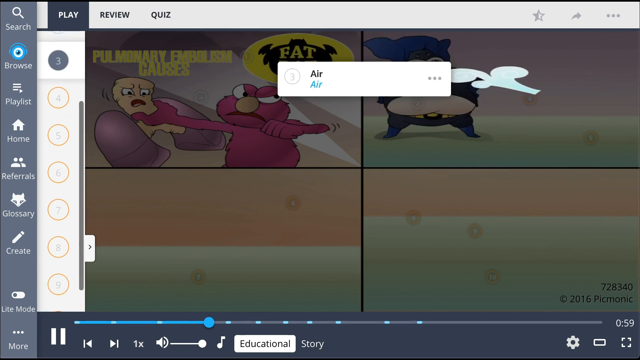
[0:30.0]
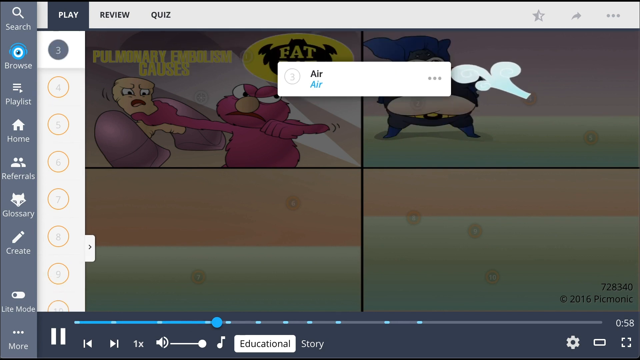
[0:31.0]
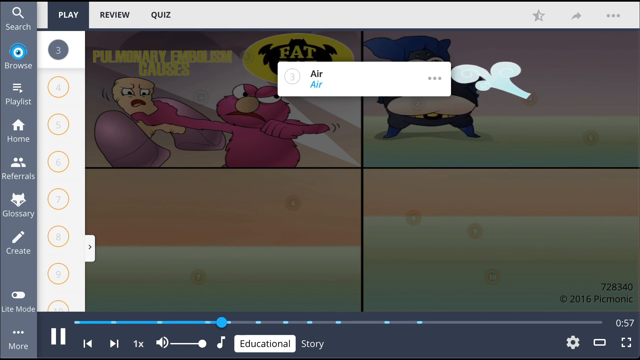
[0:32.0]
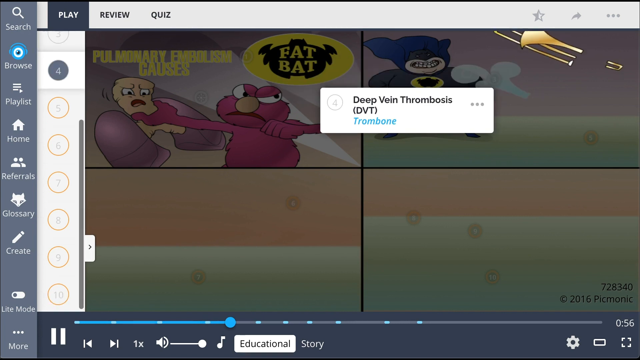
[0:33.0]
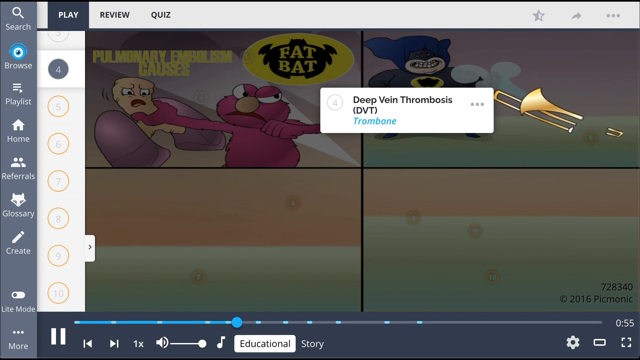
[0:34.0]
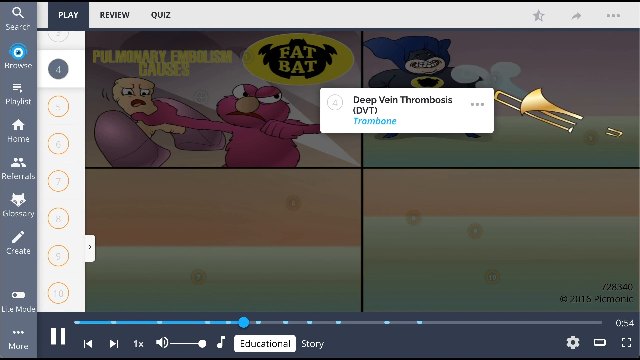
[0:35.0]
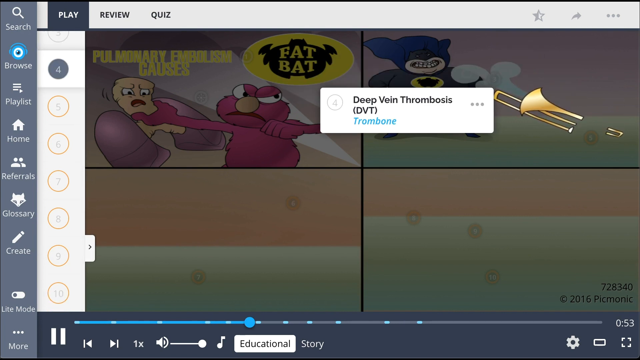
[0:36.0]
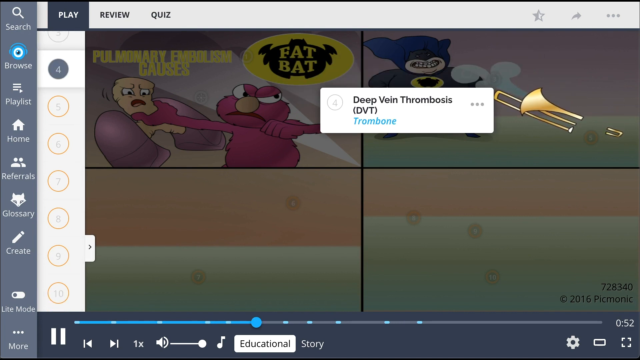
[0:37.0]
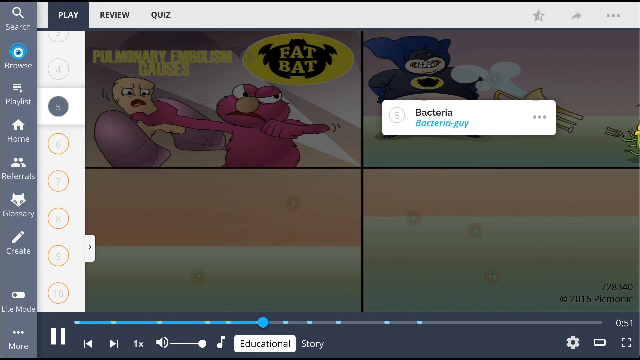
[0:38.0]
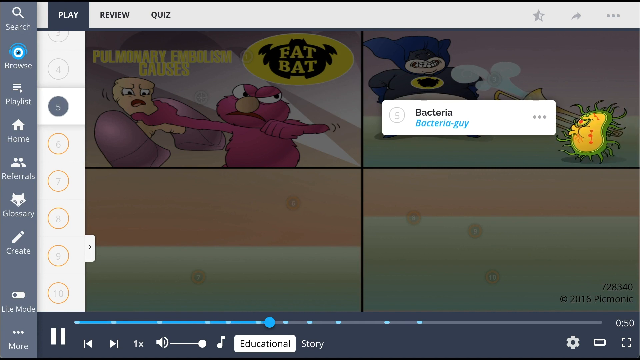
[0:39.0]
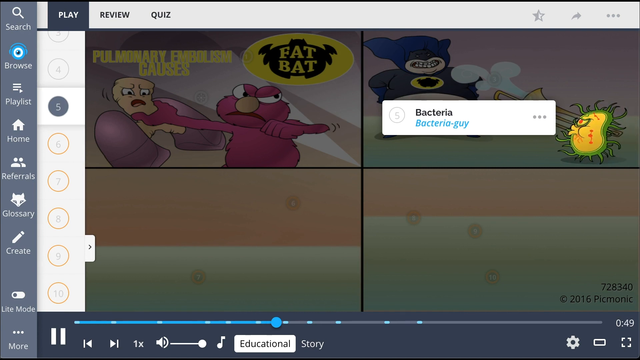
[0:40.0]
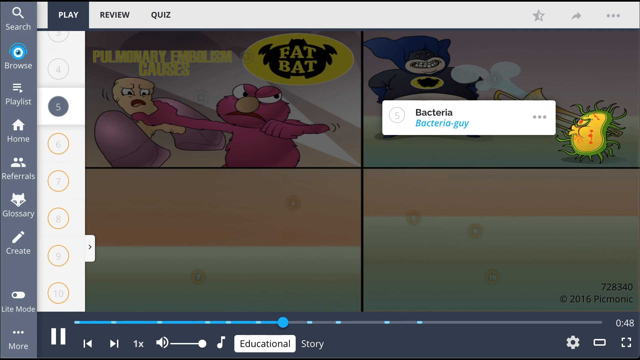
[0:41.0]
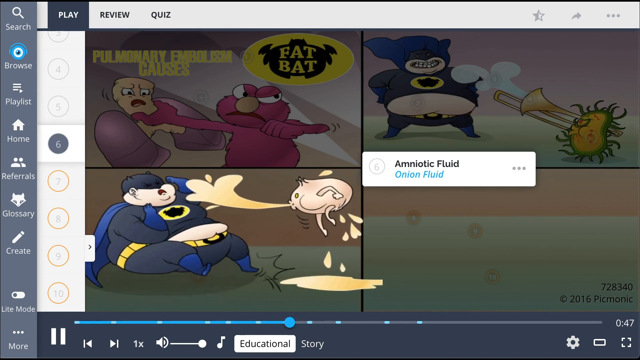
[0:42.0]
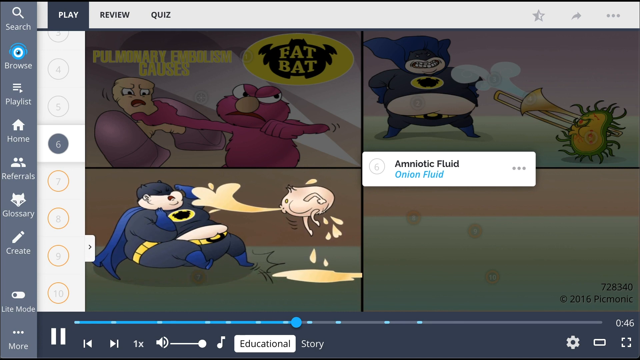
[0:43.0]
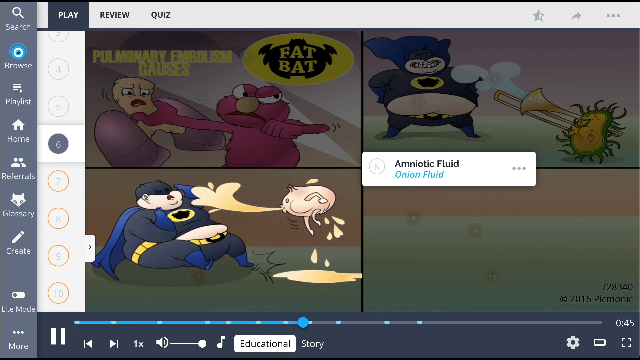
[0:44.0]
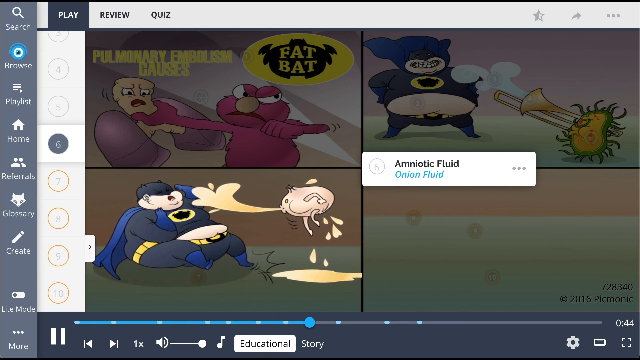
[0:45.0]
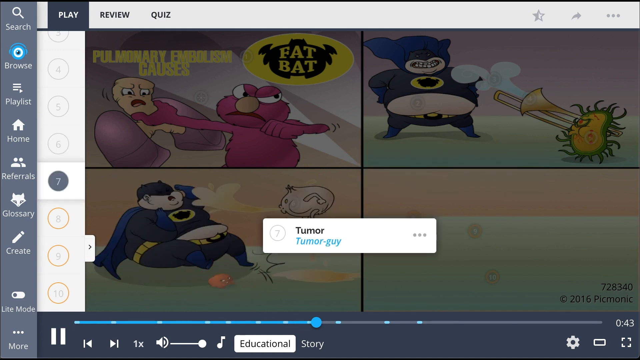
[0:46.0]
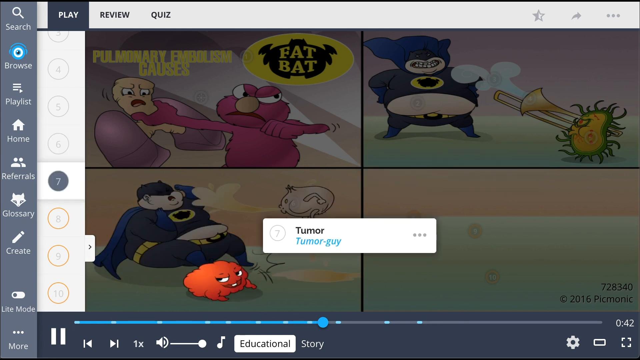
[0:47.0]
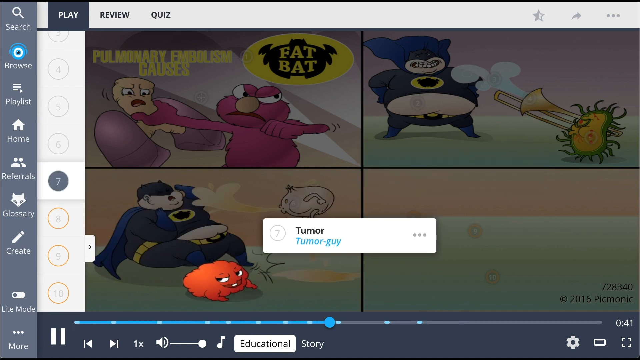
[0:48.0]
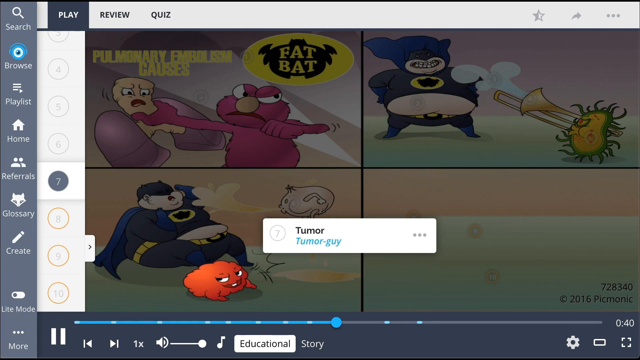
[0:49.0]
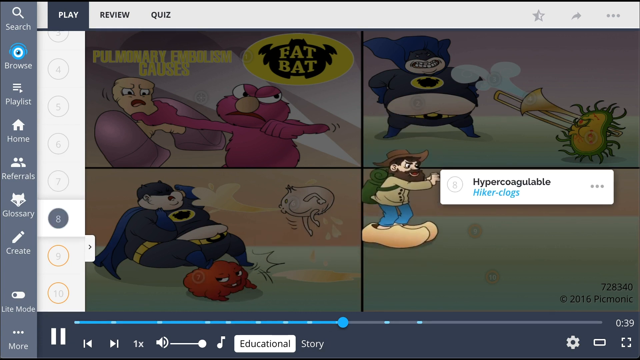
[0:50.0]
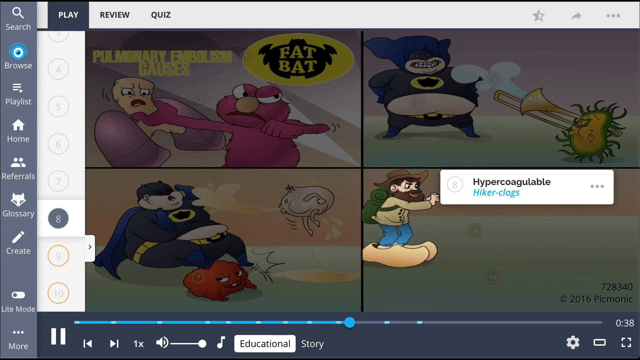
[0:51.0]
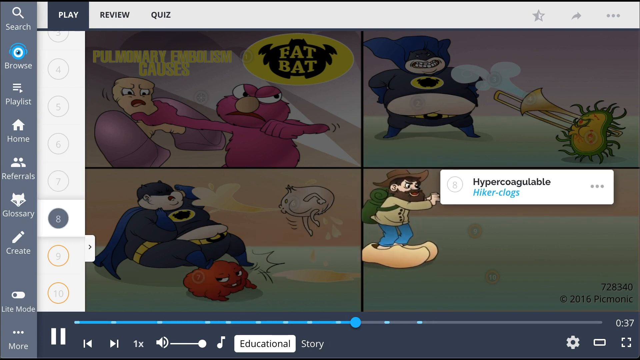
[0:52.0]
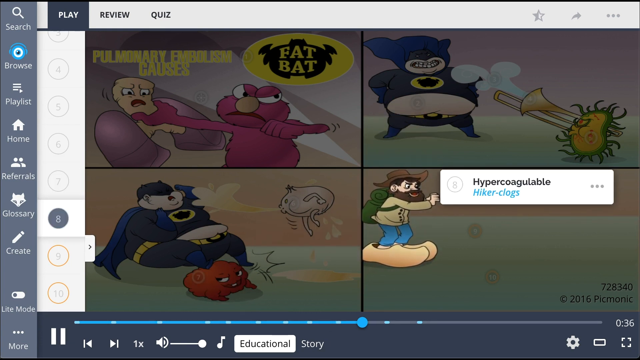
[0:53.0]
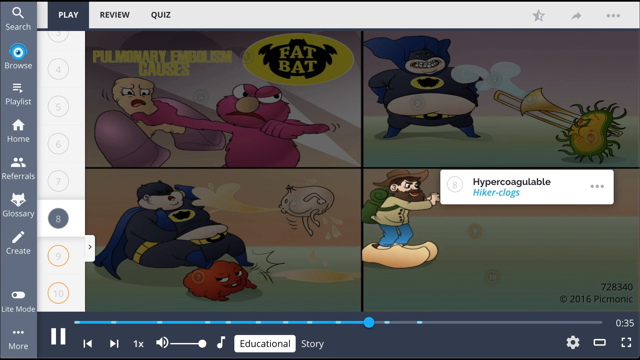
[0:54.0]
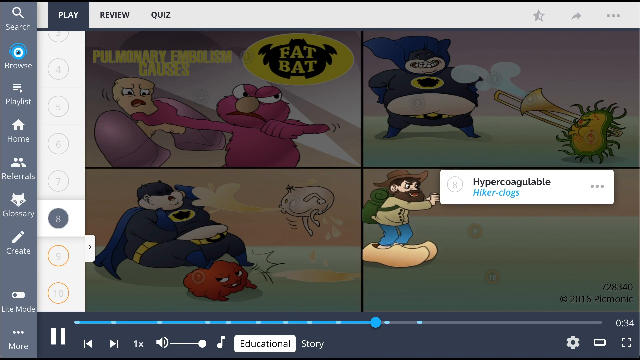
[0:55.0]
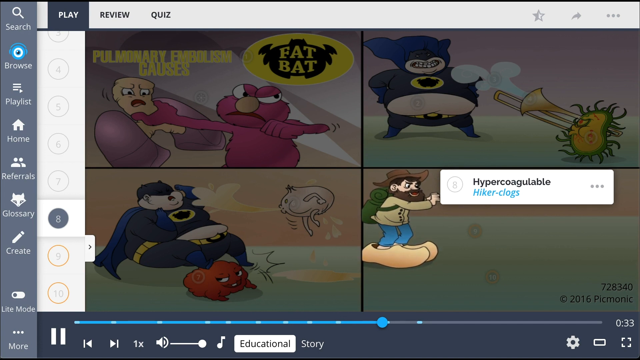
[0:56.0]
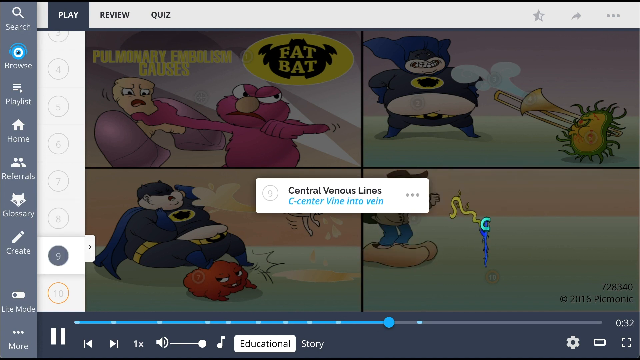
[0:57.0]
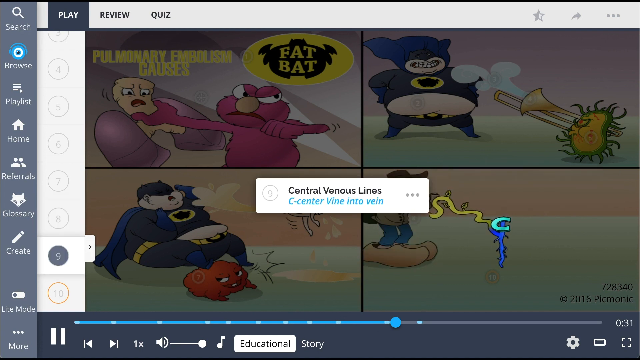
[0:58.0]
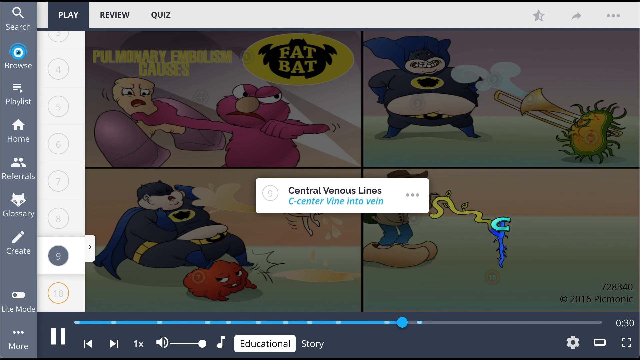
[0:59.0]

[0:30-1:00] Four little boxes from a screen share are shown. One box has an Elmo fighting an organ and an oval with Fat Bat in it. In the second square, a Fat Batman is breathing out air, and a small rectangular box overlaid on it says "three and air." The air Batman breathes out begins to move. A gold pipe instrument appears and bounces up and down, and from the side comes a green and yellow bacteria with red spots, blowing on the pipe instrument. In the third square, Fat Batman falls and amniotic fluid is breathed onto him from an onion, and a tumor suddenly appears right by Batman's leg. In the fourth square, a man with a hat and big shoes starts to appear, and a black and yellow Venus vine that resembles a plant starts to attack the man.